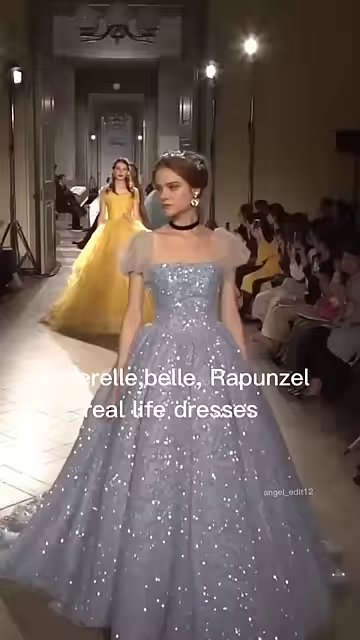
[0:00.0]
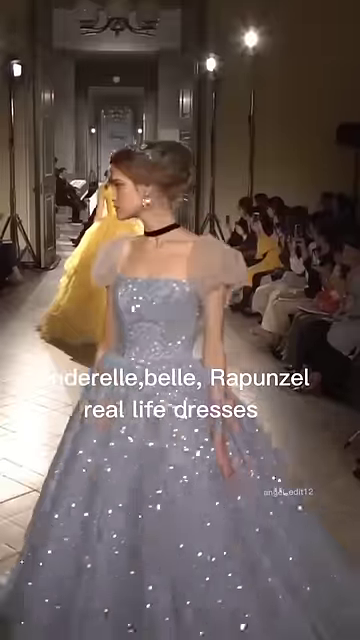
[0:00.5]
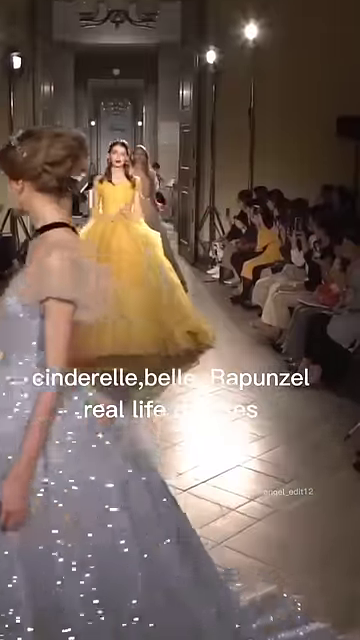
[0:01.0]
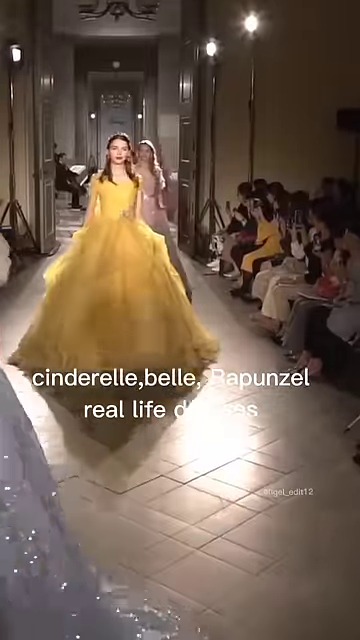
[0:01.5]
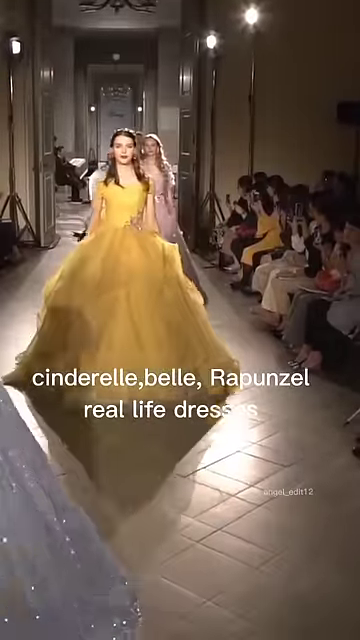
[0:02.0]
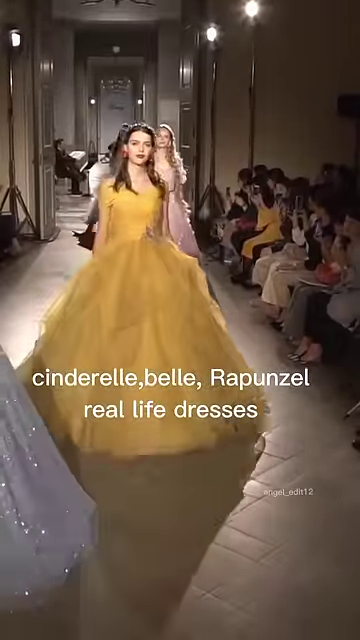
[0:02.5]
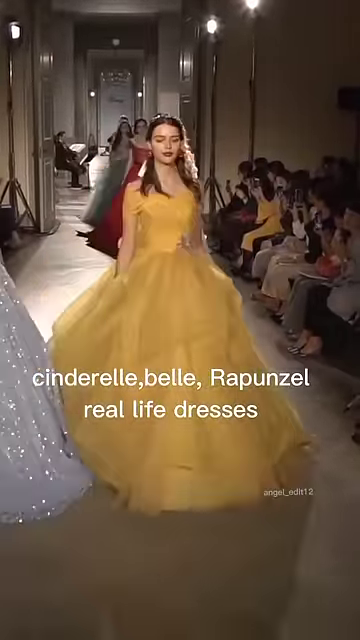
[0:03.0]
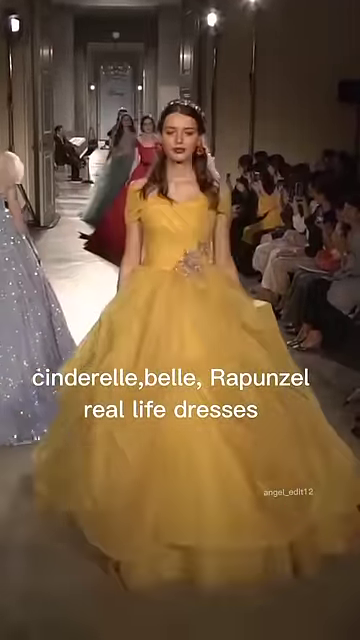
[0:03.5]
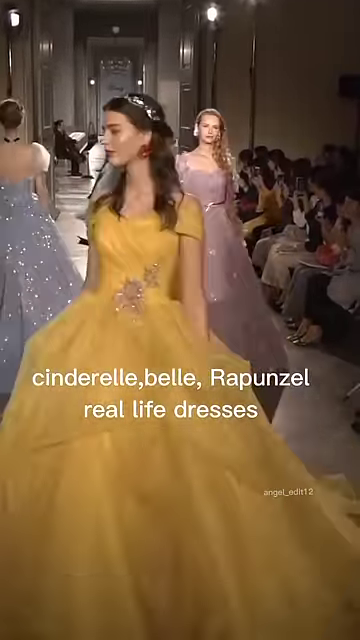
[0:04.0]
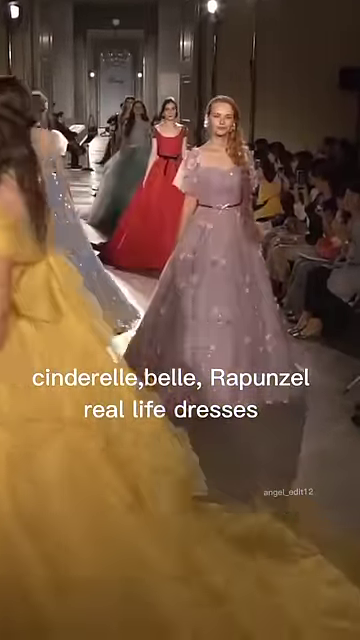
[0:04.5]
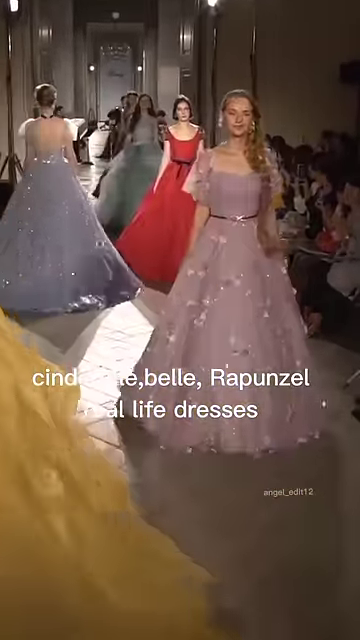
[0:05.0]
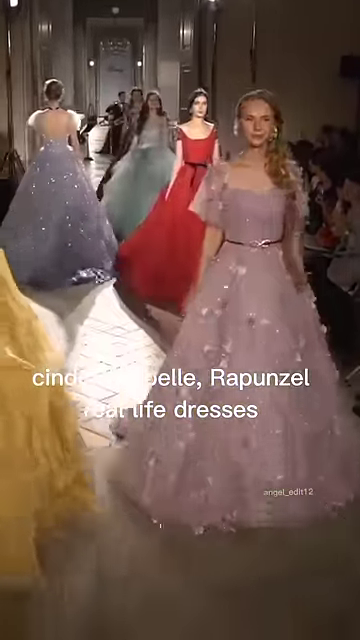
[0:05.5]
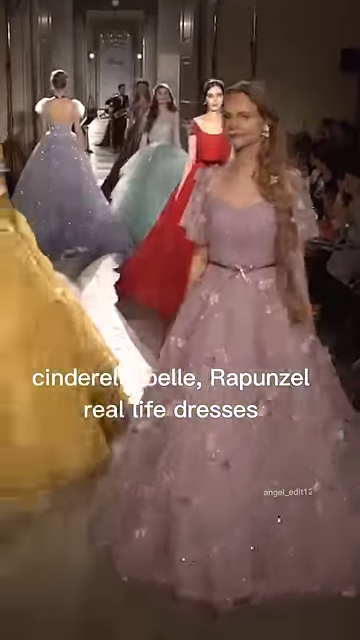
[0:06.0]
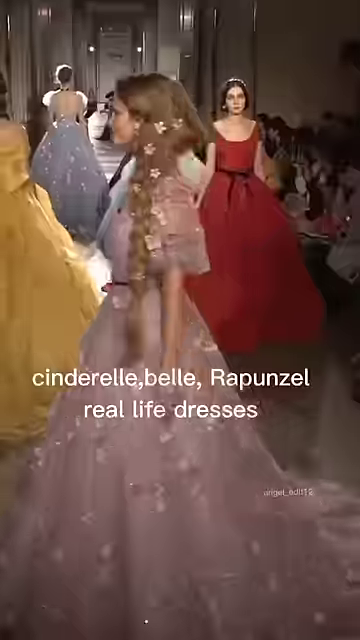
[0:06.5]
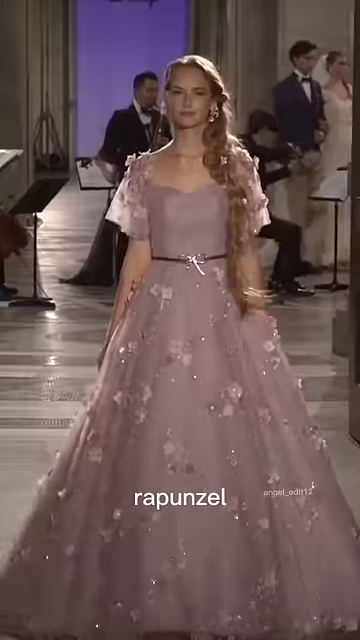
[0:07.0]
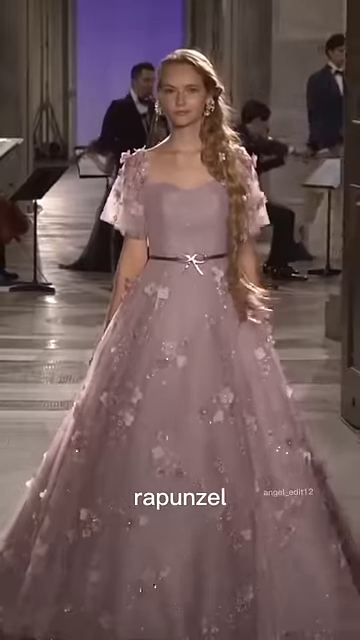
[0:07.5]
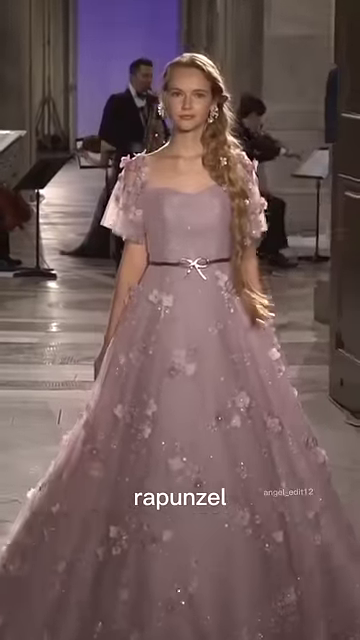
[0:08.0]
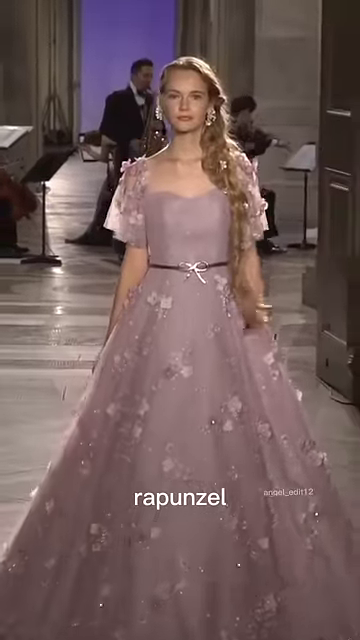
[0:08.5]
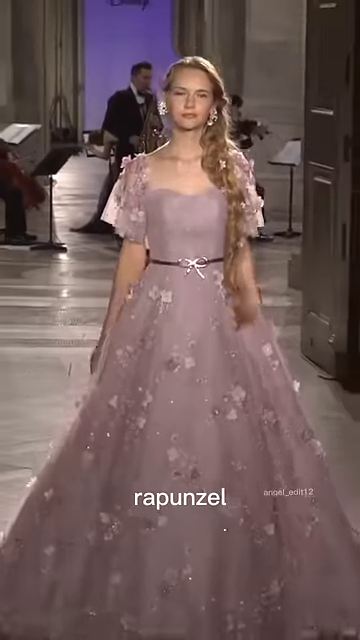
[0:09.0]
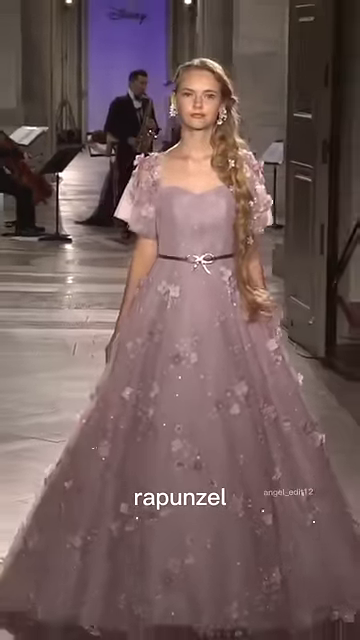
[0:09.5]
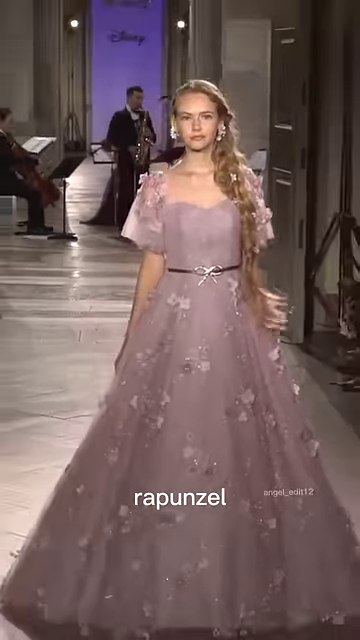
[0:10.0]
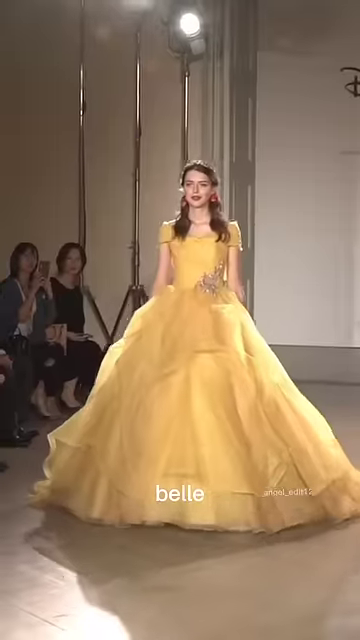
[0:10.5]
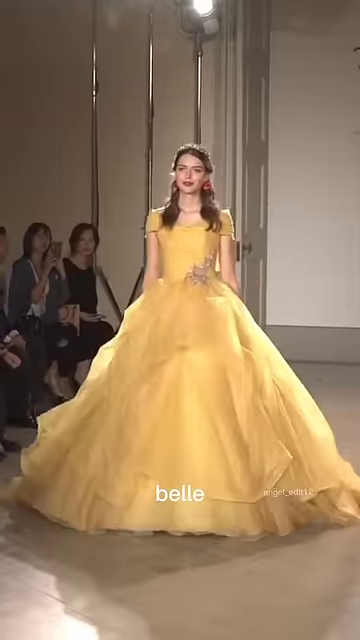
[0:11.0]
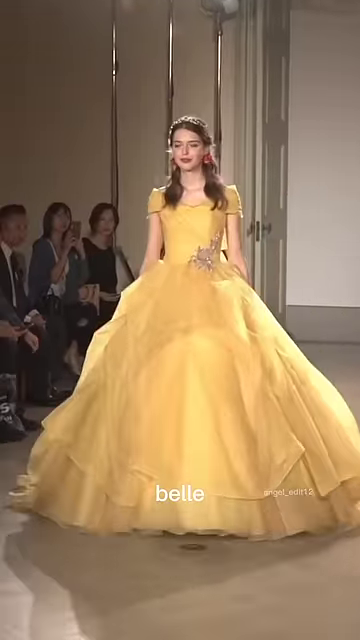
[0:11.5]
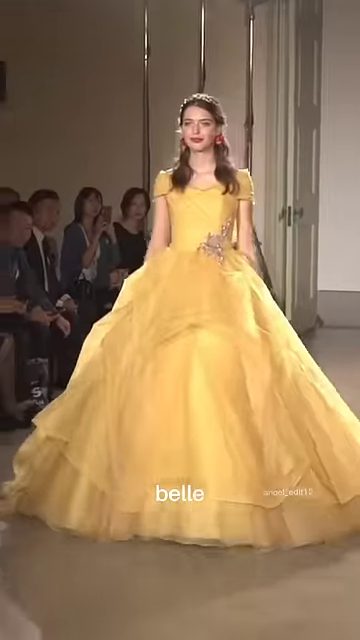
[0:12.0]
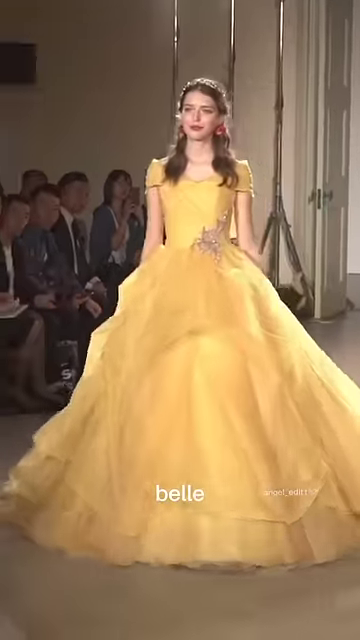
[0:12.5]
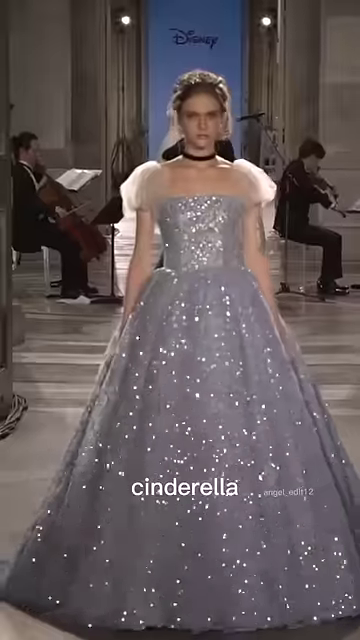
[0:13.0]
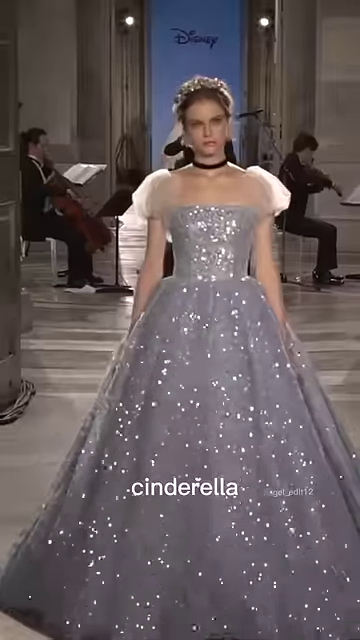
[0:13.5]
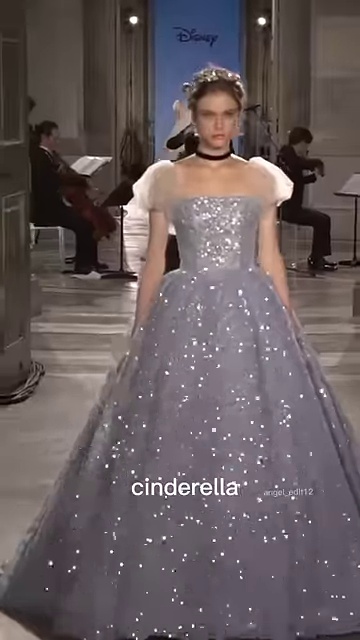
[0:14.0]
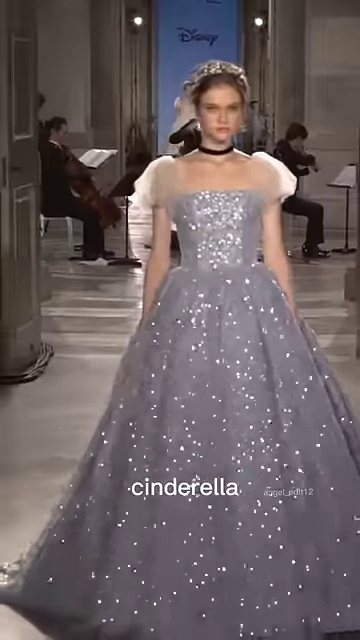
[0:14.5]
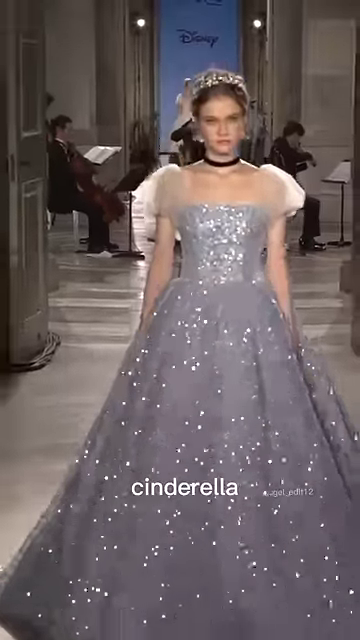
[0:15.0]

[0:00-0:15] The video opens on a runway showing a woman in a grey dress with some rhinestones on it; she is wearing a tiara. A caption reads "Cinderella Belle Rapunzel real life dresses." In the background a row of people is watching, and it appears to be a fashion show featuring different dress colors and characters. The second dress is a very long yellow dress worn by a woman with brown hair. The next is a purple dress worn by someone with long blonde pigtails. The video then cuts to a person in a purplish dress that appears to have flowers on it, with a caption showing just the name "Rapunzel," presumably the character being represented. Next comes a solo shot of the woman with brown hair in the very long, fluffy yellow dress, labeled "Belle." Then Cinderella walks down the runway in her grey dress, which is also very long. The dresses all have similar styles but different colors.